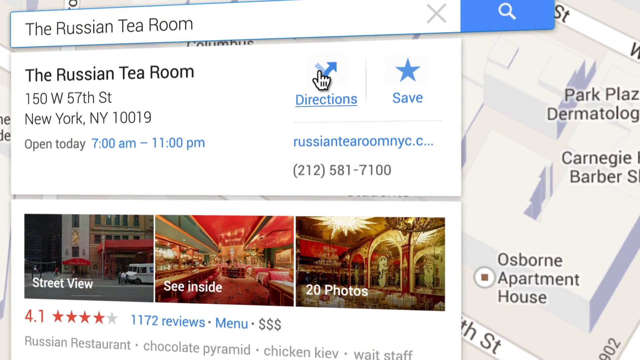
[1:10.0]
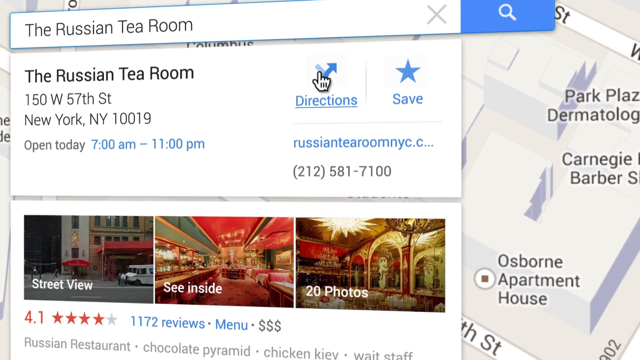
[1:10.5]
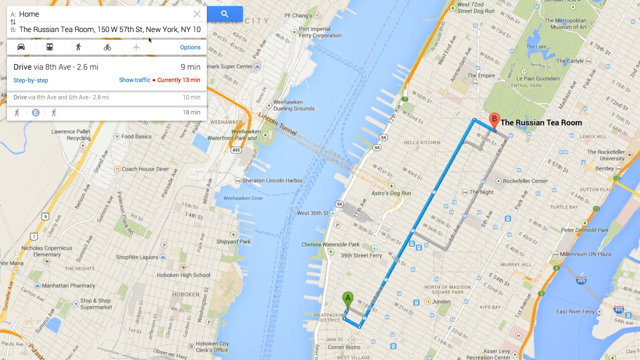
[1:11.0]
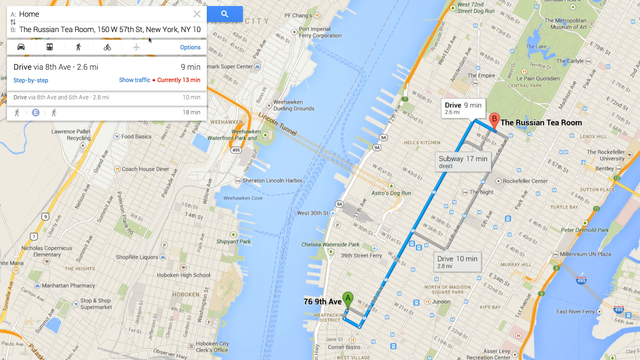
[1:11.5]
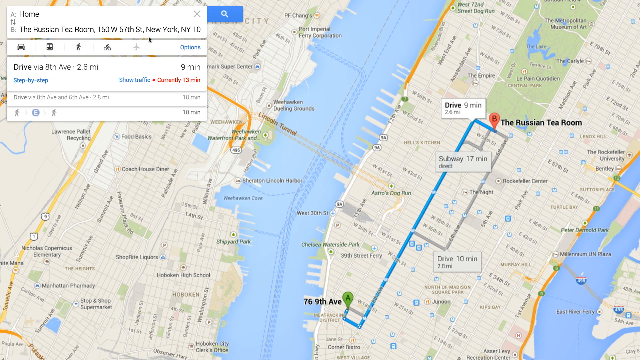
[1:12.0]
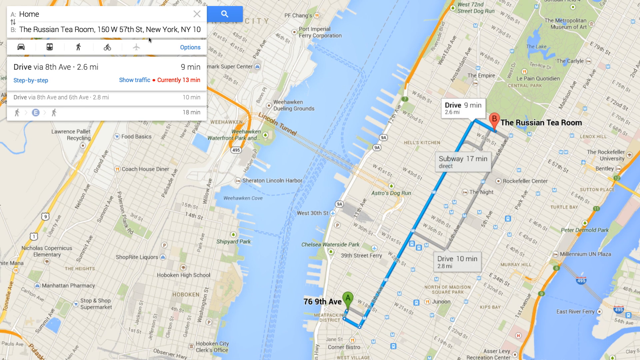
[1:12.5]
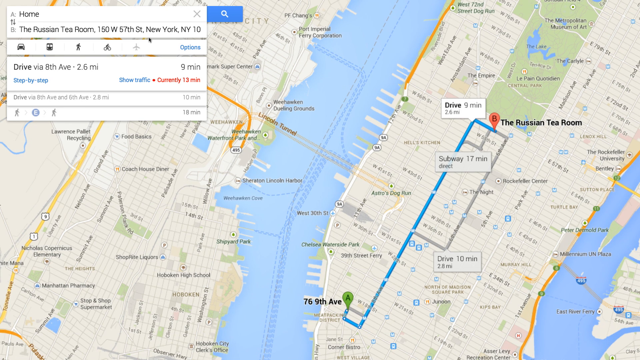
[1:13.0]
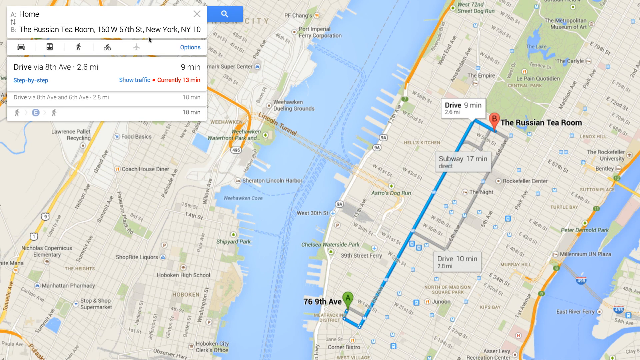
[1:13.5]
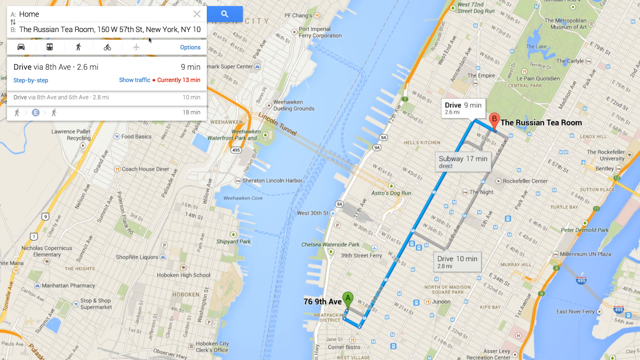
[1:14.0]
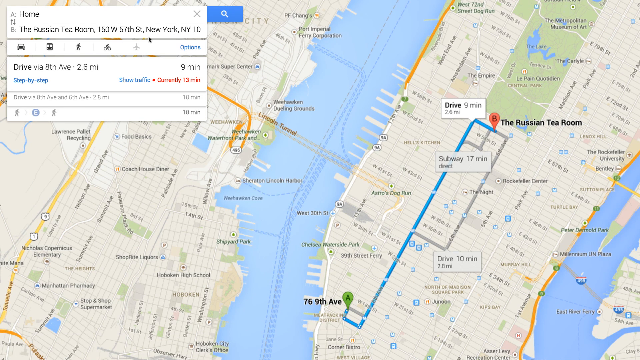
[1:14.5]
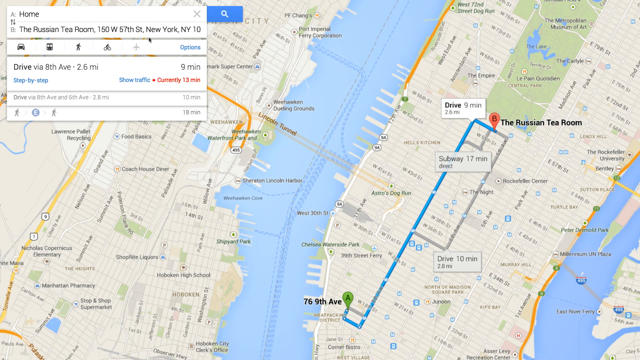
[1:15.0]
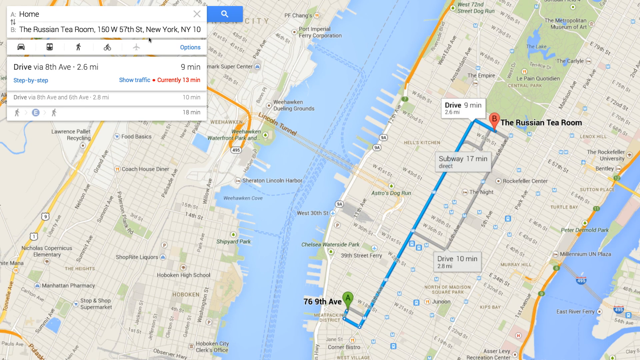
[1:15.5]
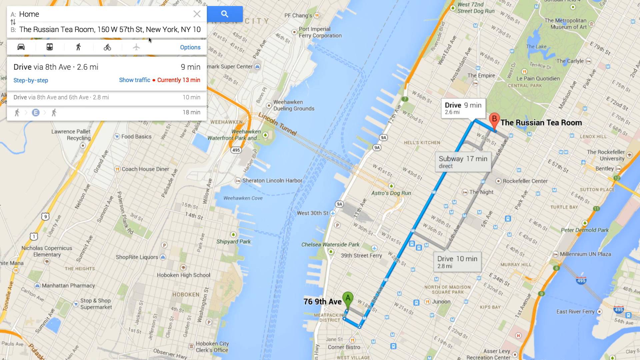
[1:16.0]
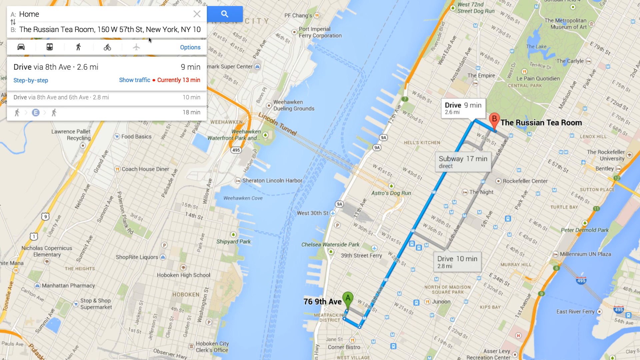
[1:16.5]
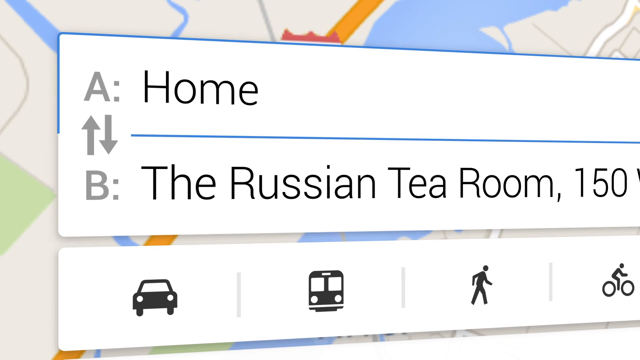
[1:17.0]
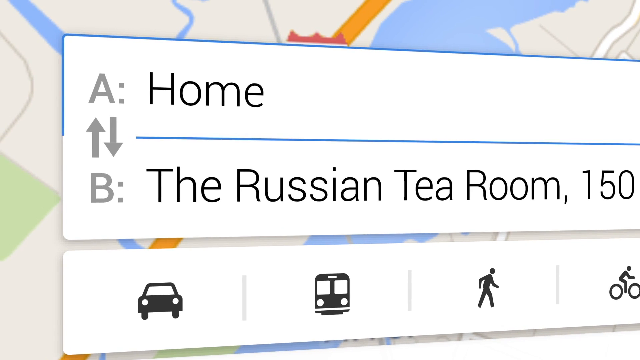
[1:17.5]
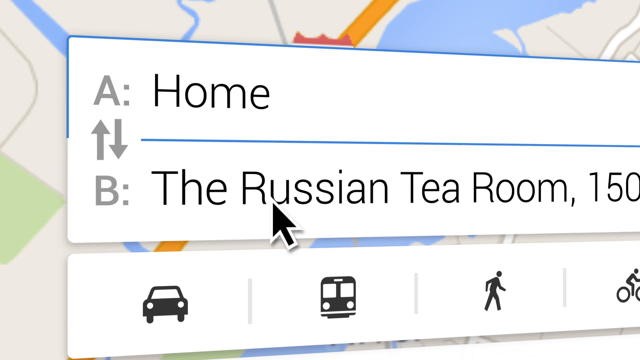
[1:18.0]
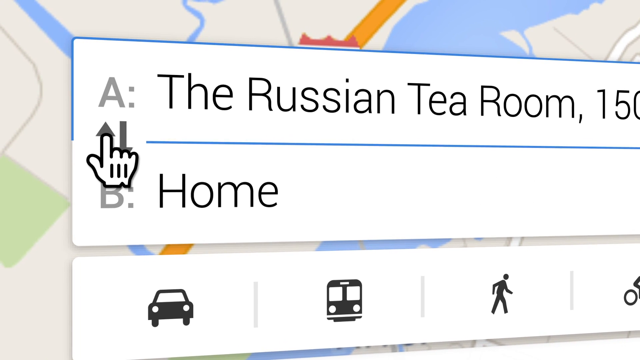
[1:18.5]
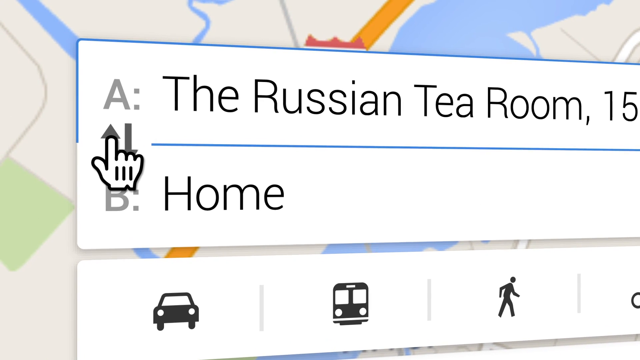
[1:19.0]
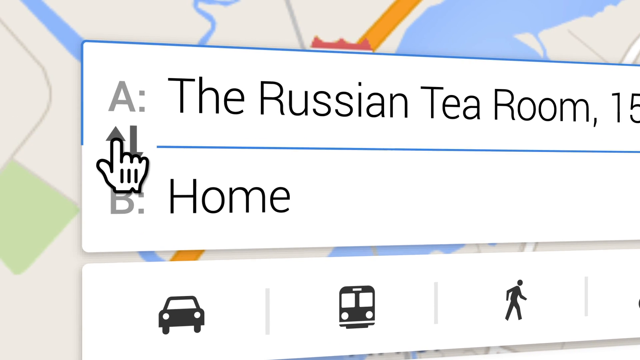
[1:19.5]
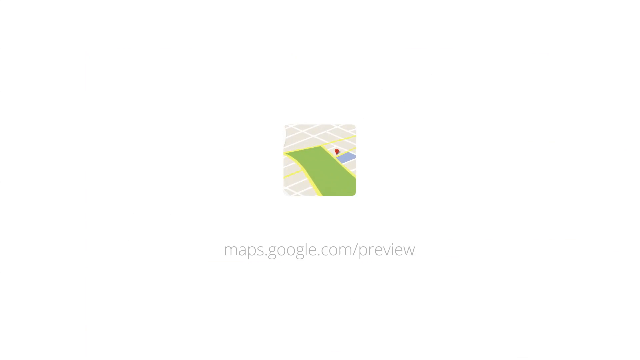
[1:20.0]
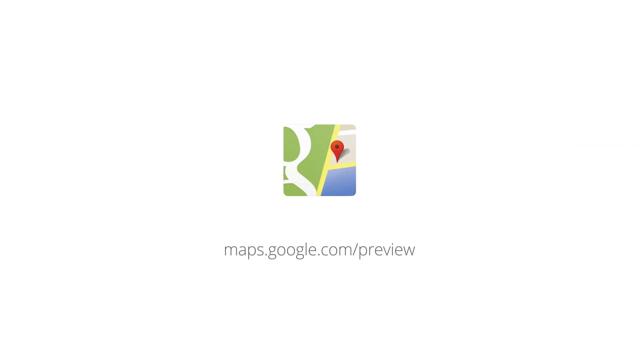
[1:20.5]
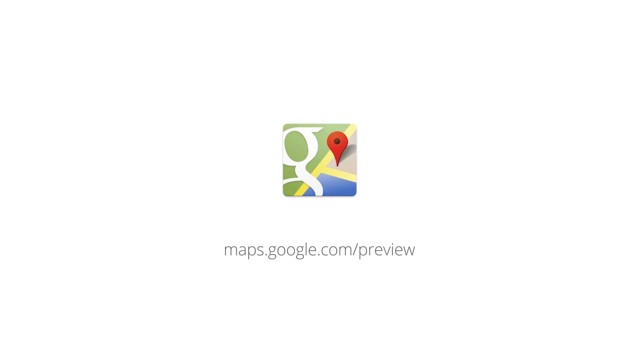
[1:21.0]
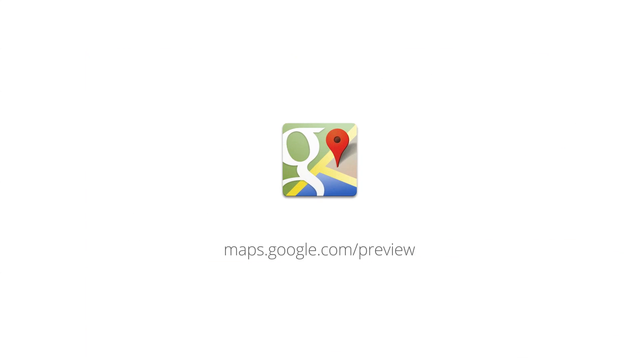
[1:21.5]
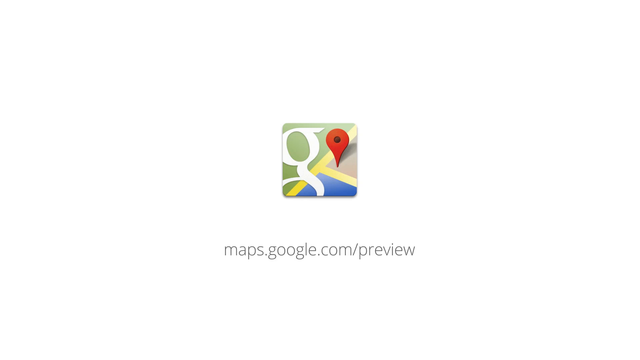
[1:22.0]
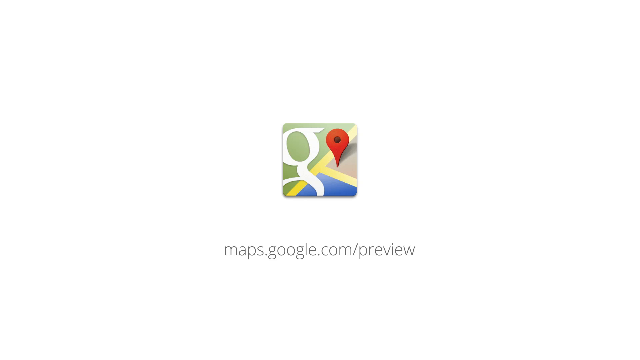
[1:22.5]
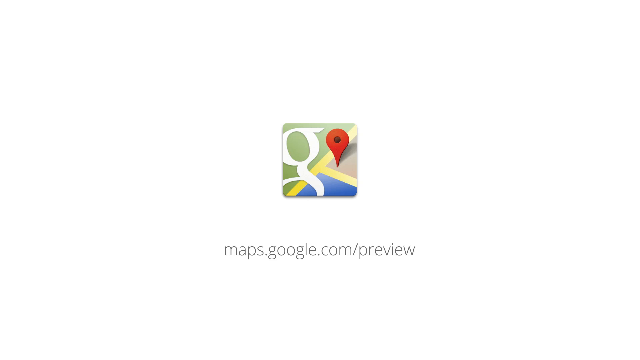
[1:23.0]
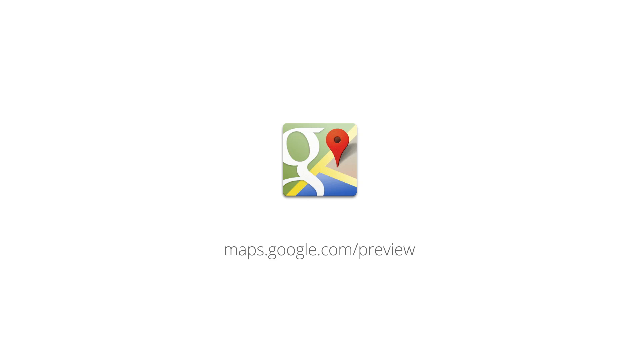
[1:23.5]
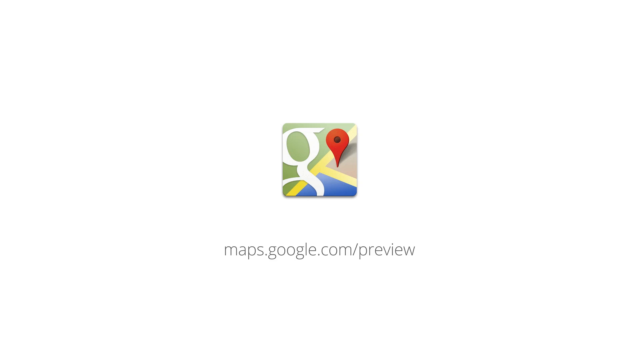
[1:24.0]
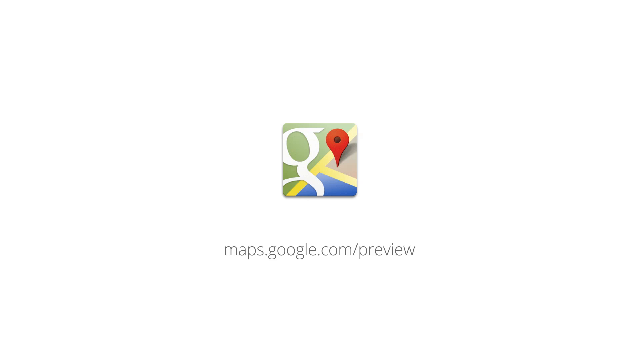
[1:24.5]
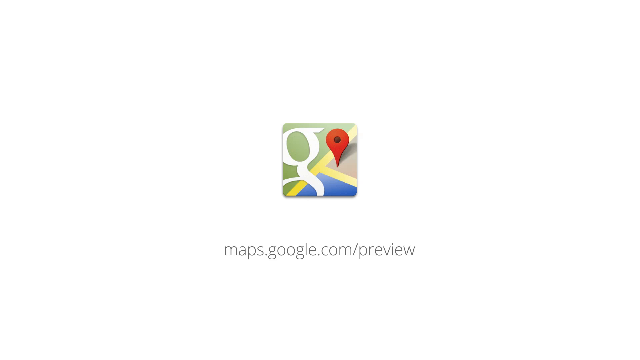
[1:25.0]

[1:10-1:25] The map is shown with "the Russian Tea Room" at the top left. Someone clicks for directions to the Russian Tea Room, and the screen shows "maps.google.com/preview" on a white background. The directions appear, showing a nine-minute drive from 76th Avenue to the Tea Room, with a blue line marking the route. Directions is clicked, and the screen goes to "maps.google.com/preview."